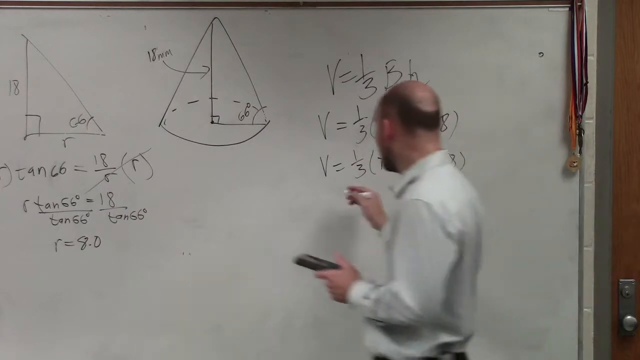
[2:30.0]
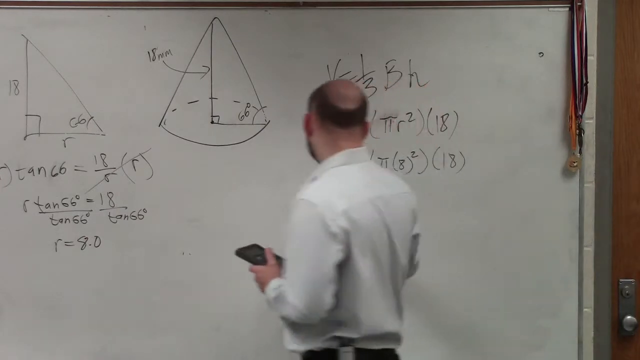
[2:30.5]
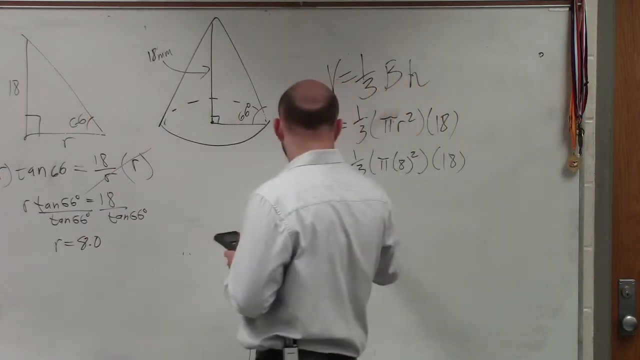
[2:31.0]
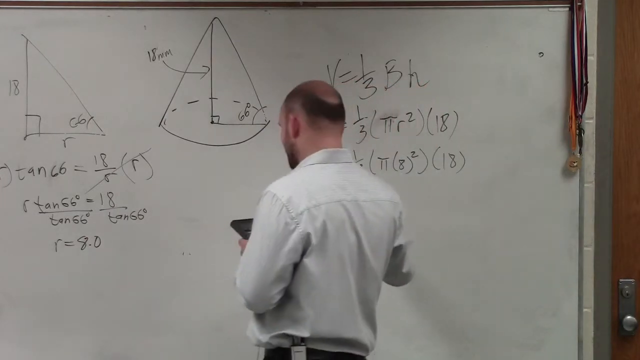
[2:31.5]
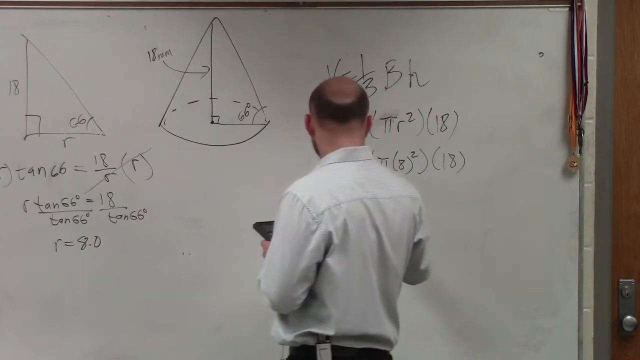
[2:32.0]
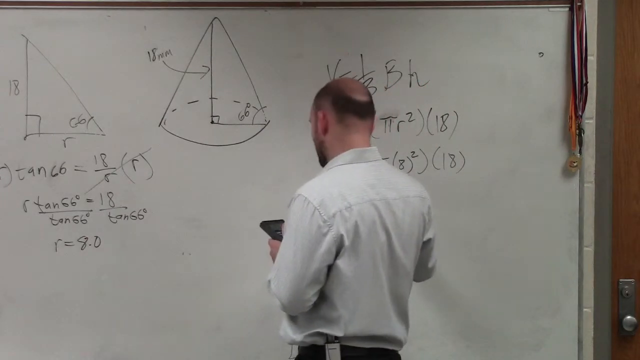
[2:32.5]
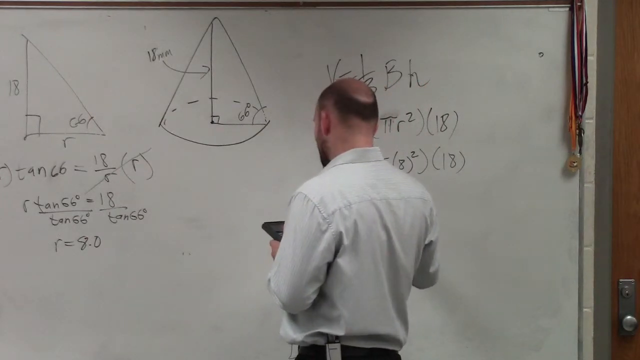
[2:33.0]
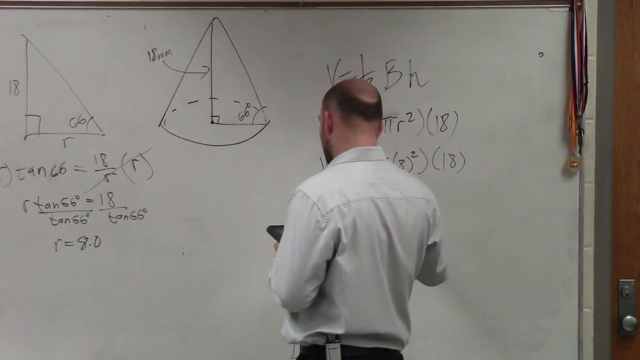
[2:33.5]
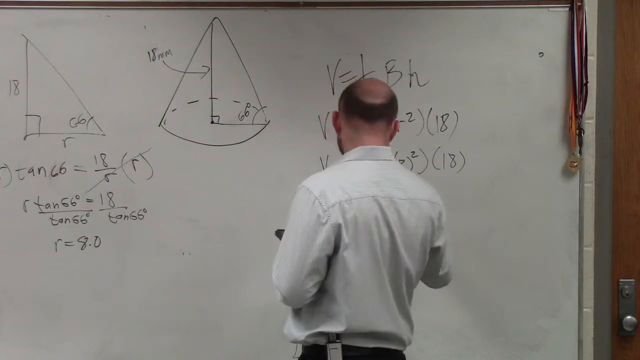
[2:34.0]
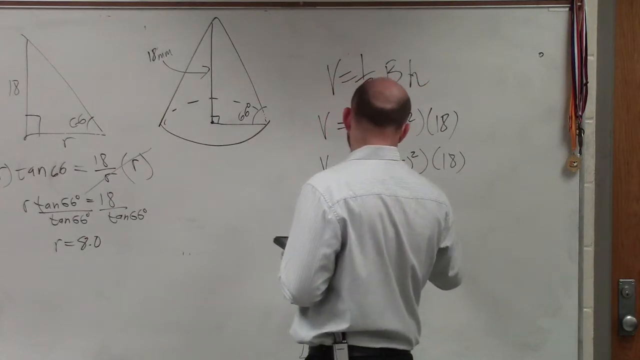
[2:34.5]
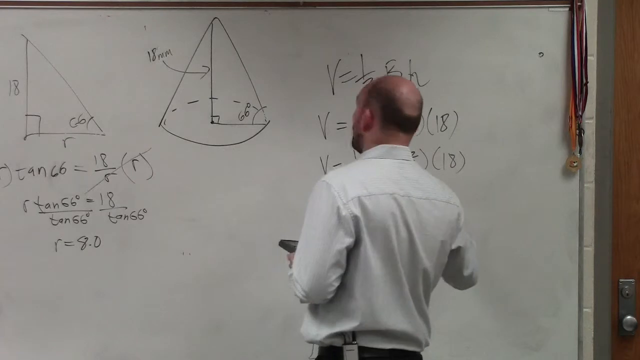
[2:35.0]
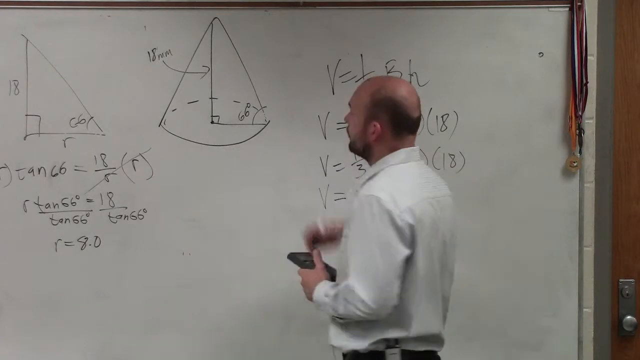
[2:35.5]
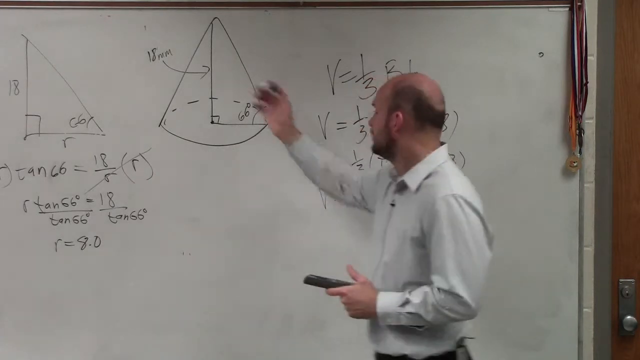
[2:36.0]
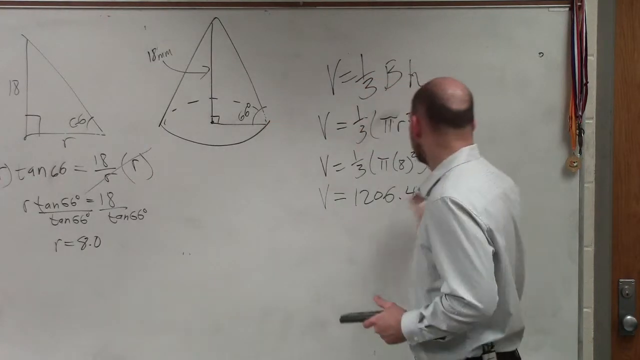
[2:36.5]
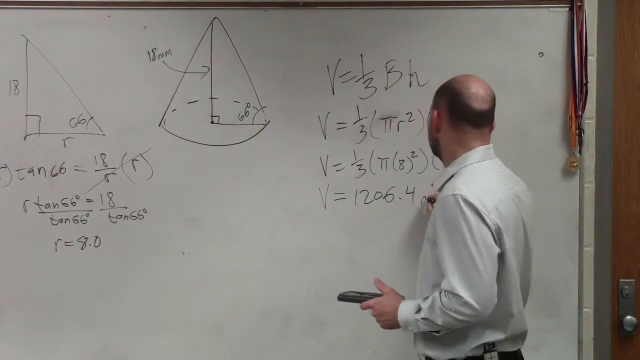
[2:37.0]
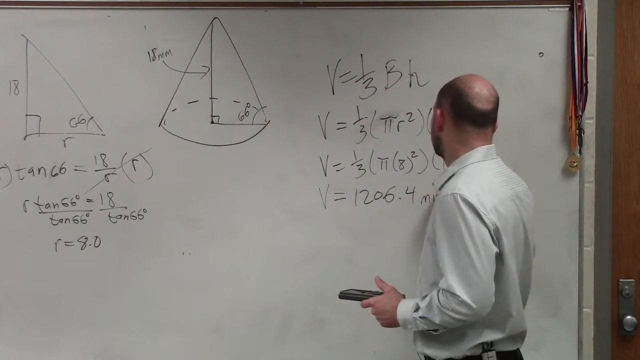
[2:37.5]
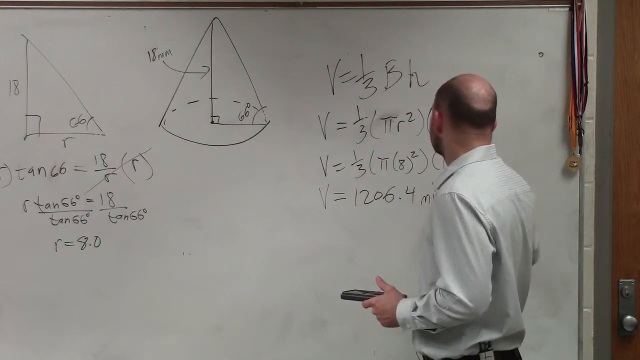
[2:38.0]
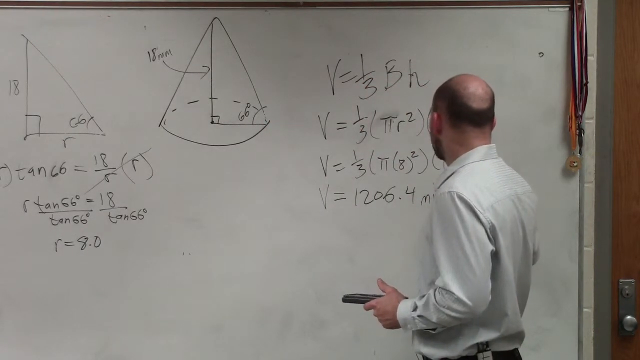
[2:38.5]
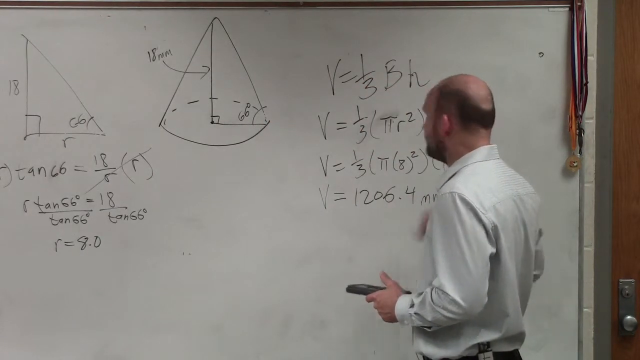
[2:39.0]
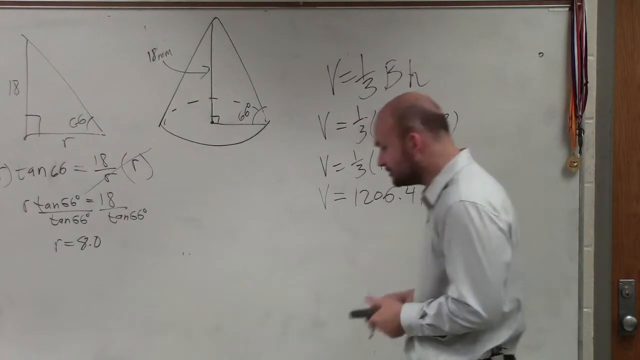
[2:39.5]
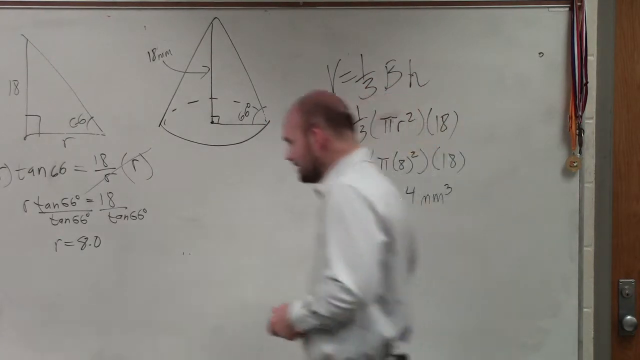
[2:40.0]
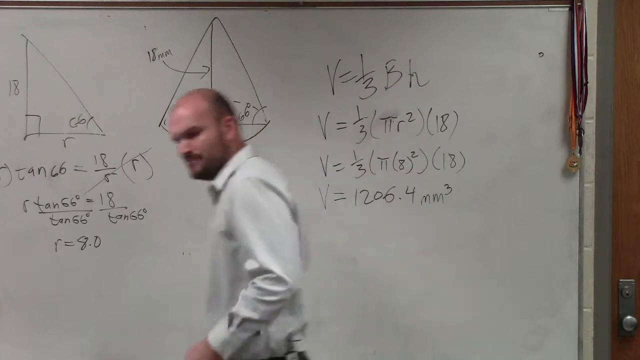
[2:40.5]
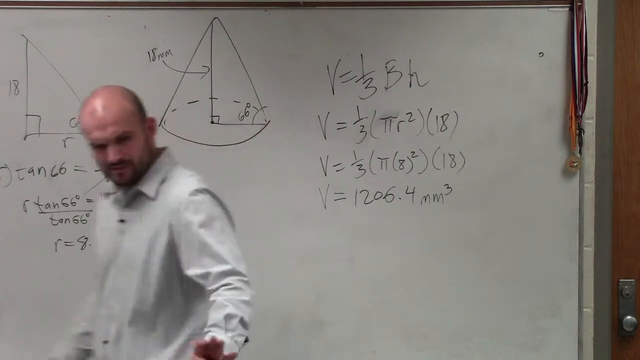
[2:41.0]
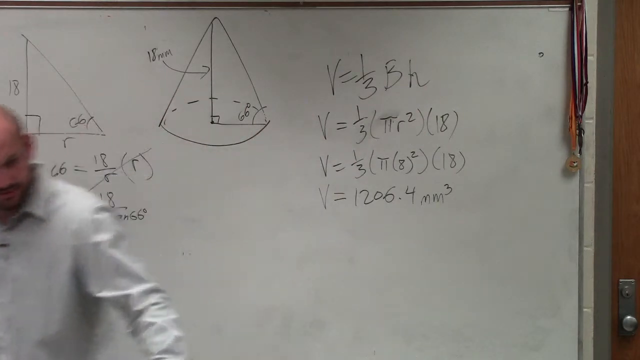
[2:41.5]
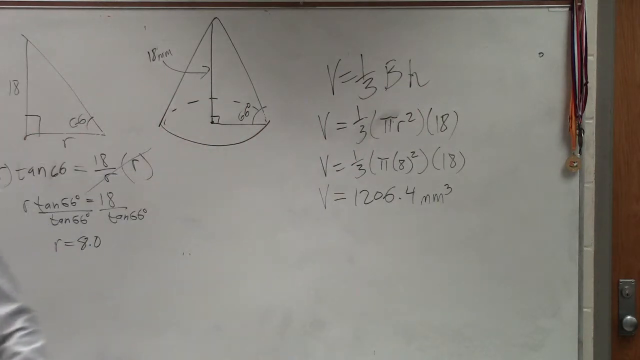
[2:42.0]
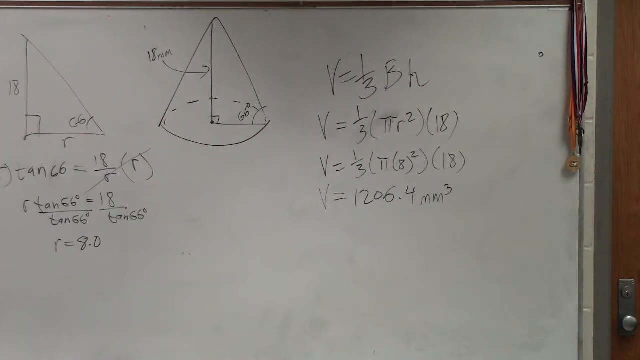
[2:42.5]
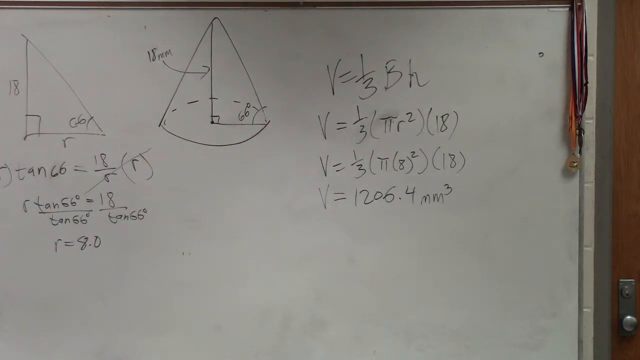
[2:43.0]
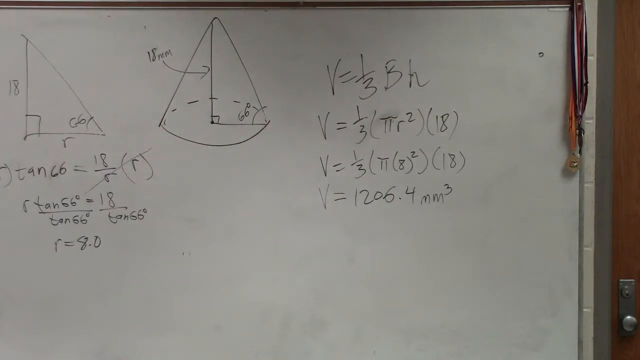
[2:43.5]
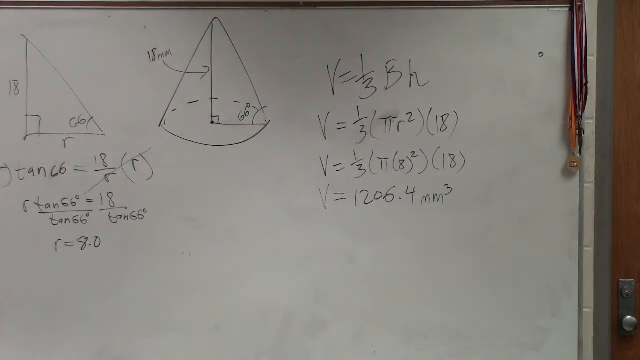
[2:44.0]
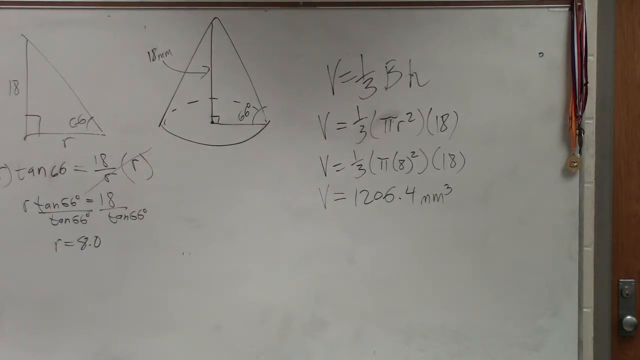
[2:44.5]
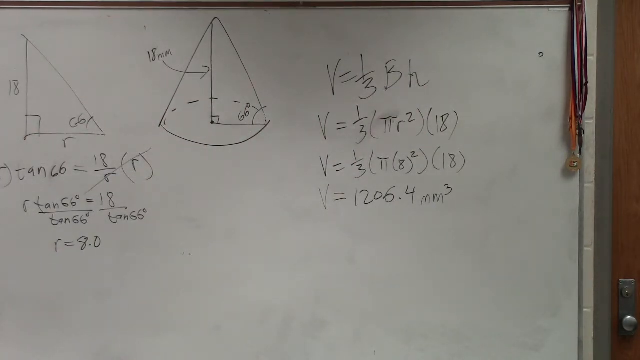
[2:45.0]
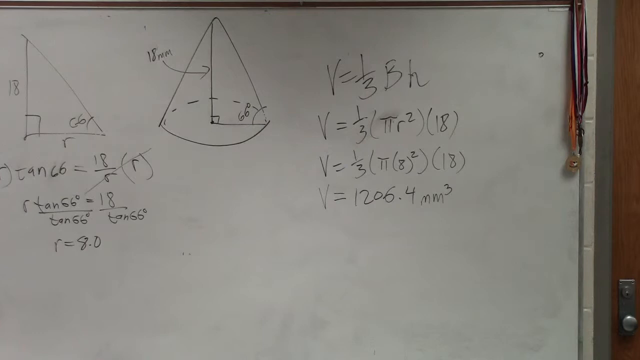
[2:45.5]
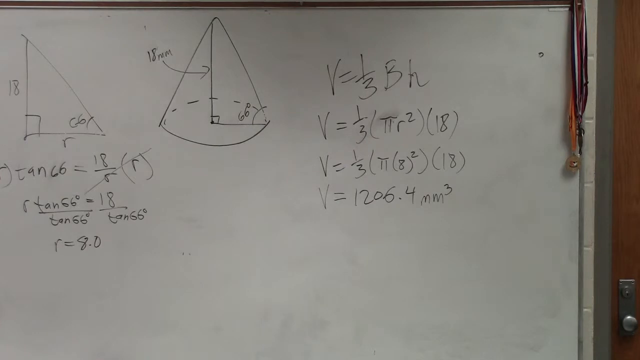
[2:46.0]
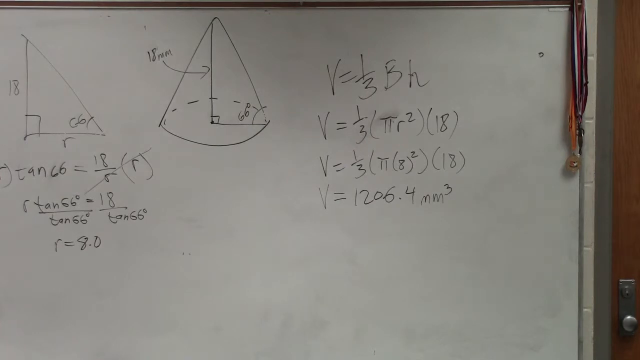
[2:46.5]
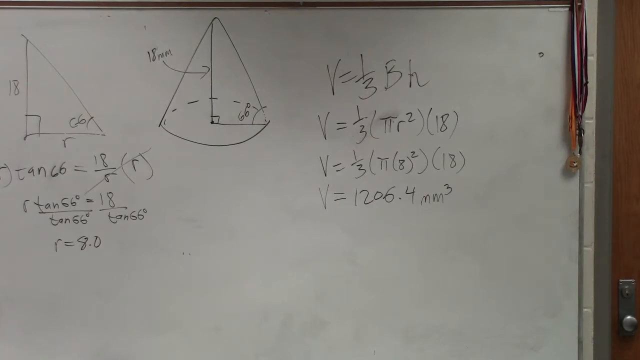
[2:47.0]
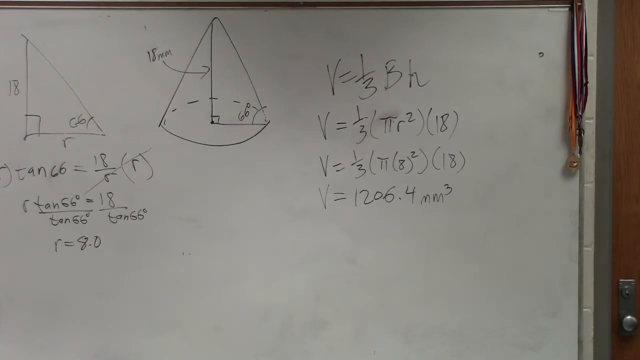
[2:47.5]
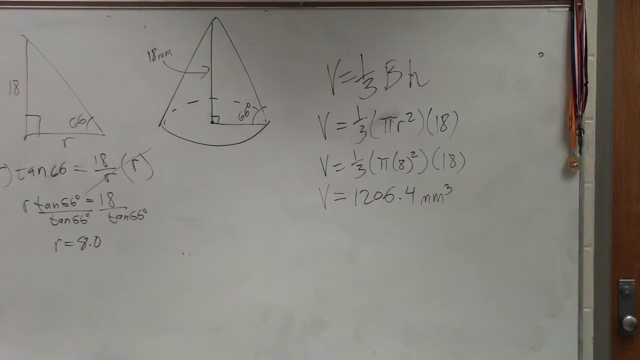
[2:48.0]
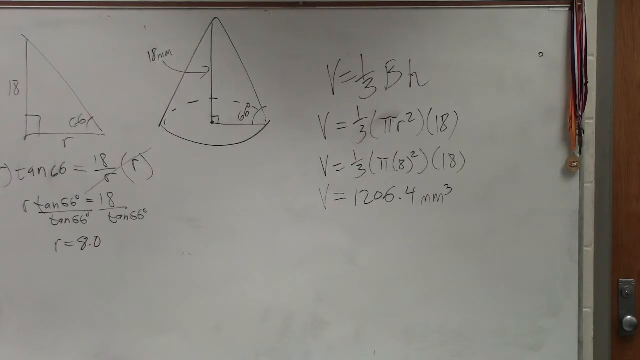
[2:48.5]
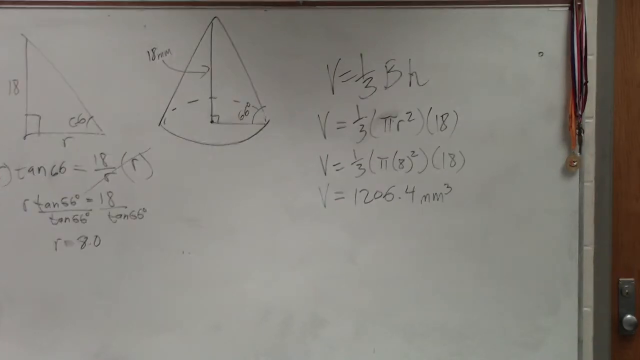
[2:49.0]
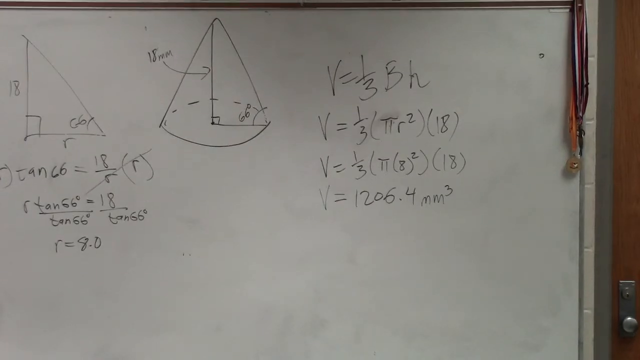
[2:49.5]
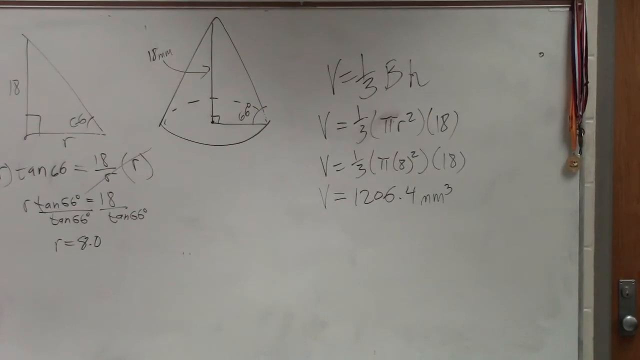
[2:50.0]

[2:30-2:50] The man writes what looks like the final part of the equation on the board: B equals 1206.4 mm to the third power. The entire equation is now visible on the whiteboard. He puts his calculator down, perhaps on a desk; he appears to keep the calculator in his back pocket. He is still talking and gesturing a great deal with his hands. At the very end he walks out of the frame, and the video becomes a little shaky; otherwise the camera has stayed in exactly the same place the whole time. What appear to be ribbons, perhaps some kind of medals, still hang on the right-hand side of the whiteboard, and the door is in the same place. The room looks like a classroom in a school, with a concrete block wall and a utilitarian door with a grey door jamb and a grey or silver doorknob.